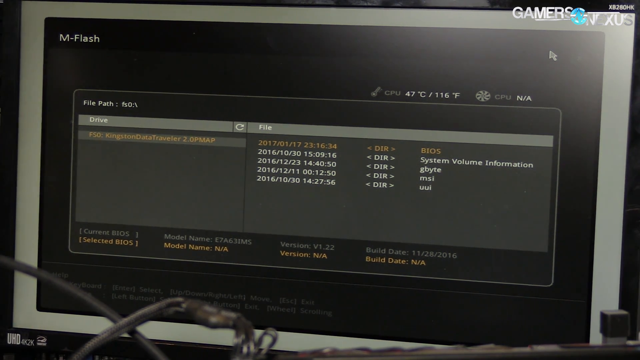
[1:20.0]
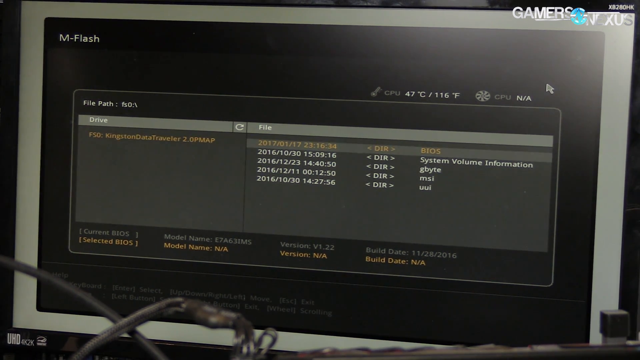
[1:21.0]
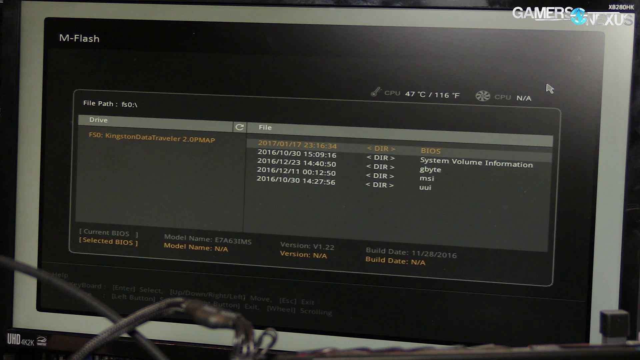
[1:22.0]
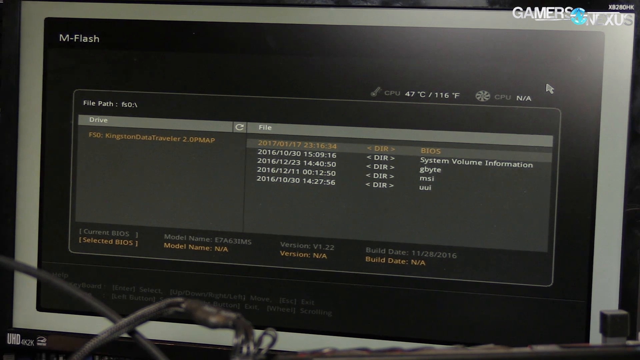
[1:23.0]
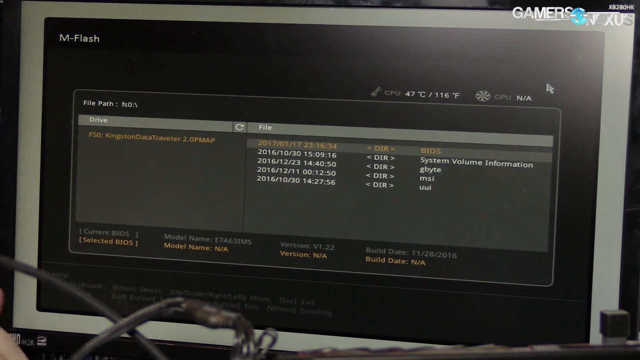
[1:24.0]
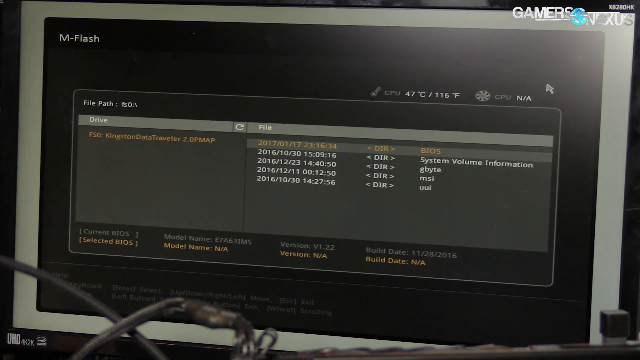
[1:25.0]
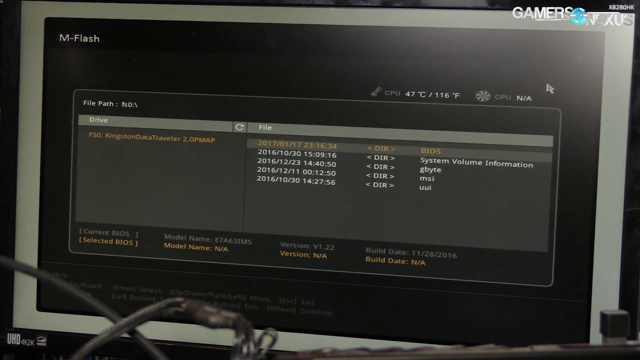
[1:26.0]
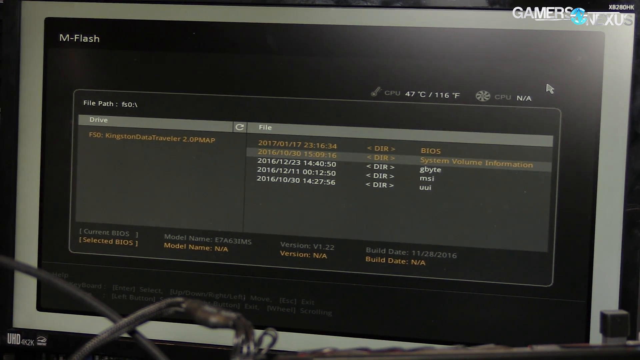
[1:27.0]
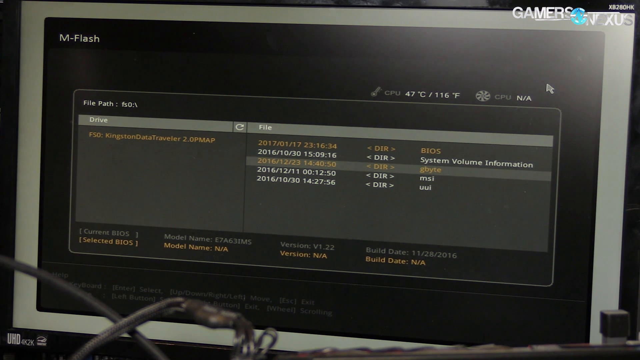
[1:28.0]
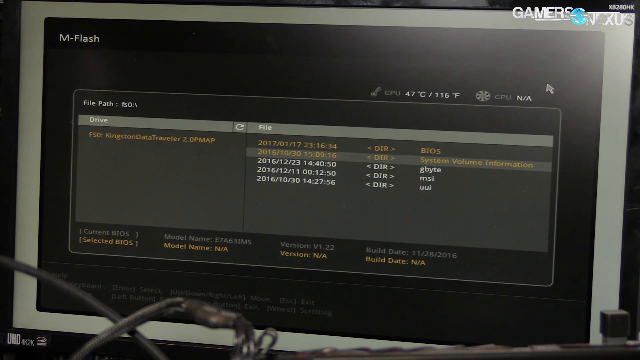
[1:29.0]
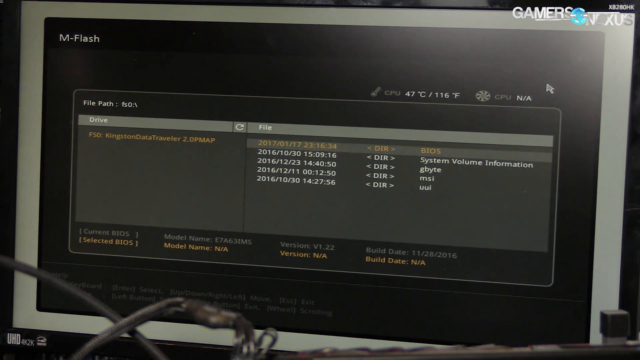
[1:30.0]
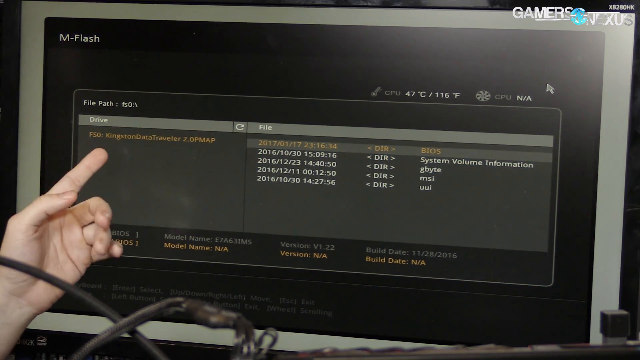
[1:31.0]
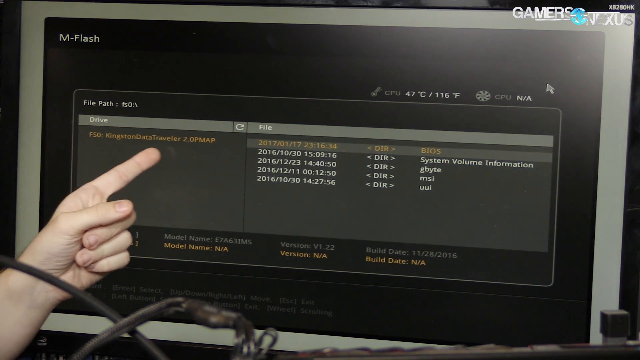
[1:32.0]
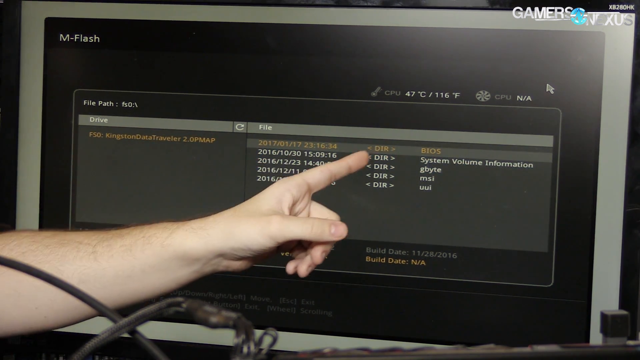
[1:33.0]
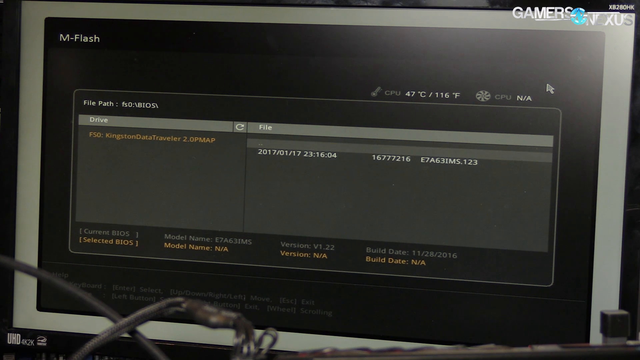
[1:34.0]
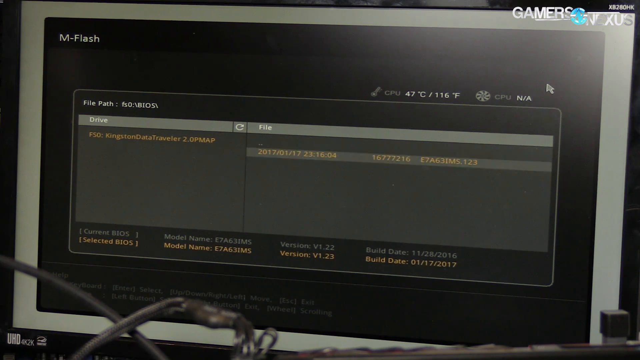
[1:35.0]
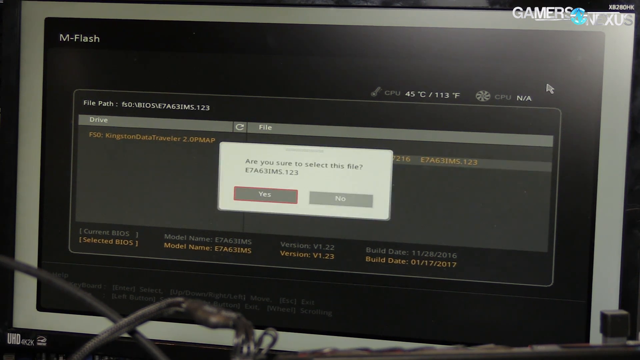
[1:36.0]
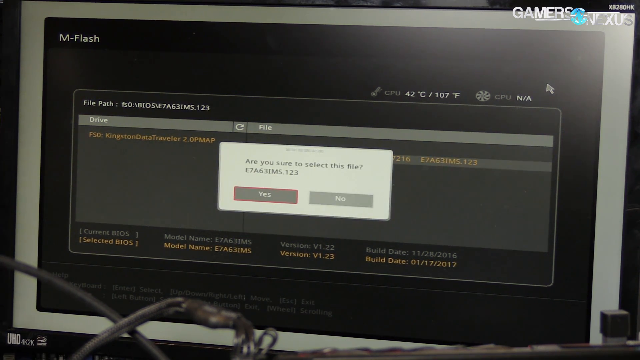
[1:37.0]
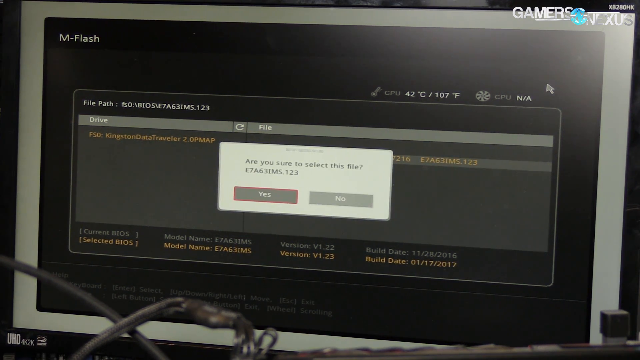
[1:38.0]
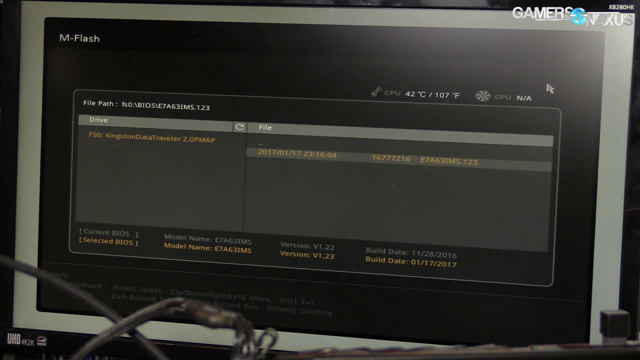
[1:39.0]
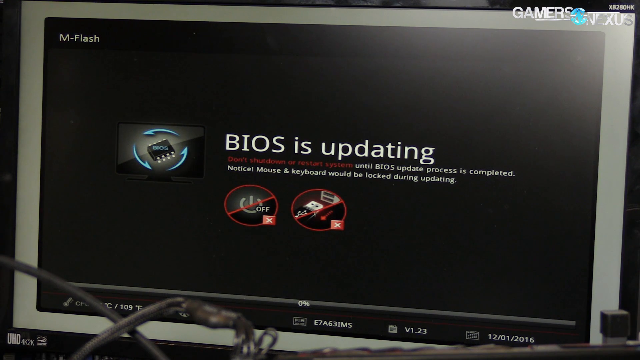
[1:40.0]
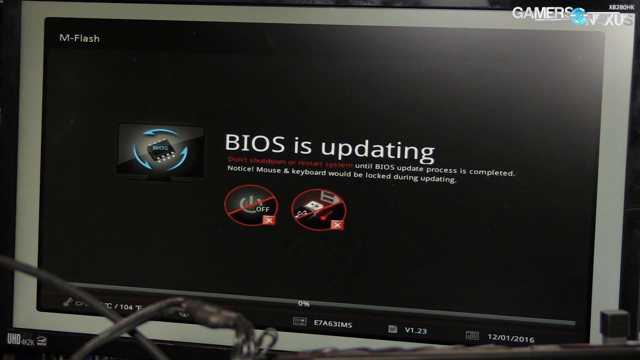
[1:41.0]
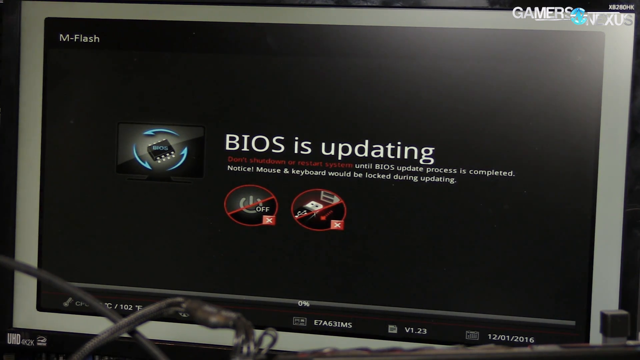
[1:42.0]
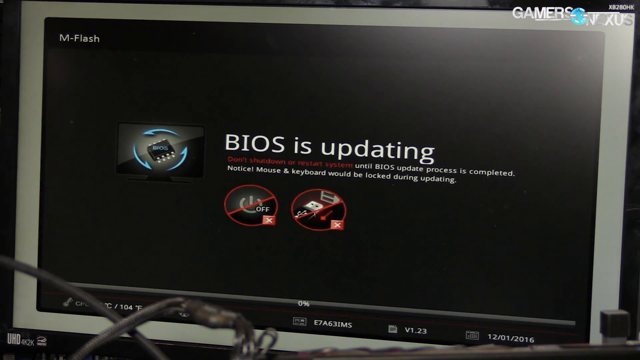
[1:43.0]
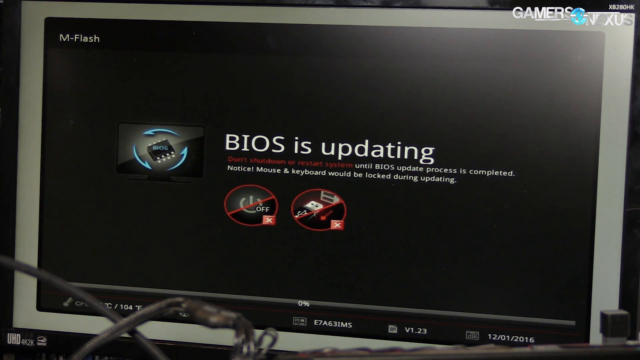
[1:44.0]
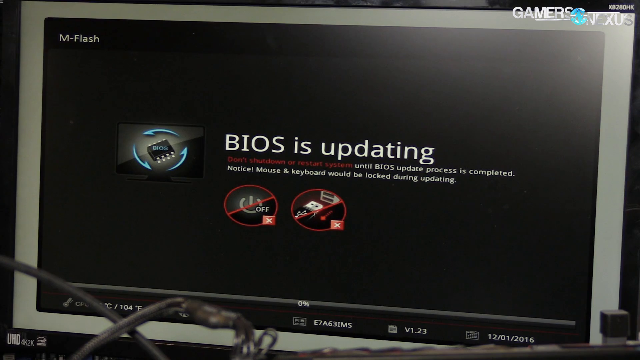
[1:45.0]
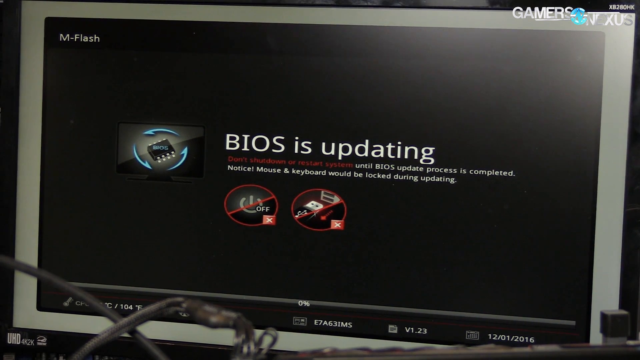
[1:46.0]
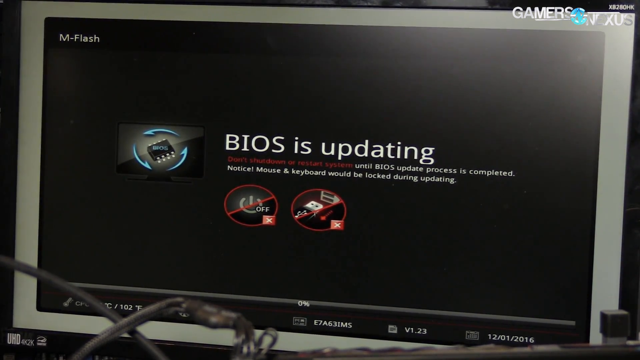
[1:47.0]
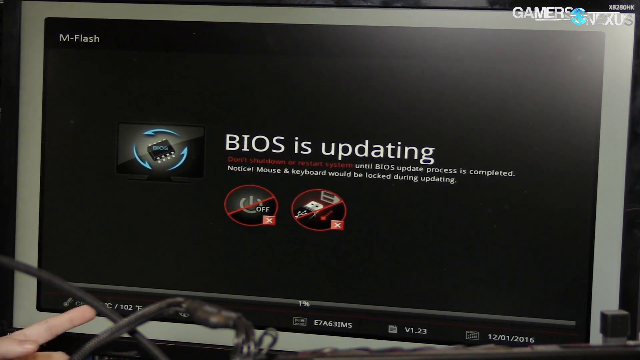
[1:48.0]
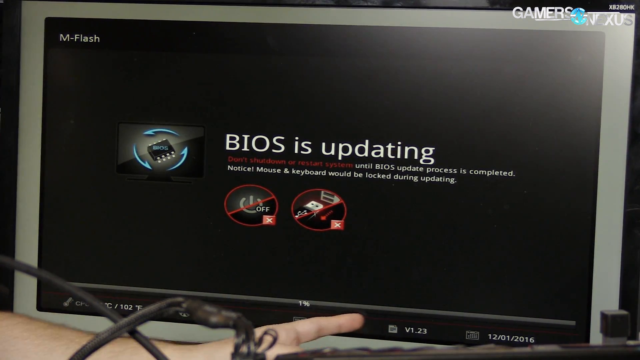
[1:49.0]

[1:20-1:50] A computer monitor shows "Gamers Nexus" at the top. The screen says "mFlash" and shows a CPU temperature of 116 degrees Fahrenheit. A file path and a drive labeled "Kingston data traveler" are shown, with entries including something with BIOS and "System Volume Information"; most of the dates say 2016 and one says 2017. Someone's hand, apparently a Caucasian person's, points to the screen. A prompt reads "Are you sure to select this file?", yes is chosen, and the screen reads "BIOS is updating. Don't shut down or restart system until BIOS update process is completed. Notice: mouse and keyboard will be locked during updating."